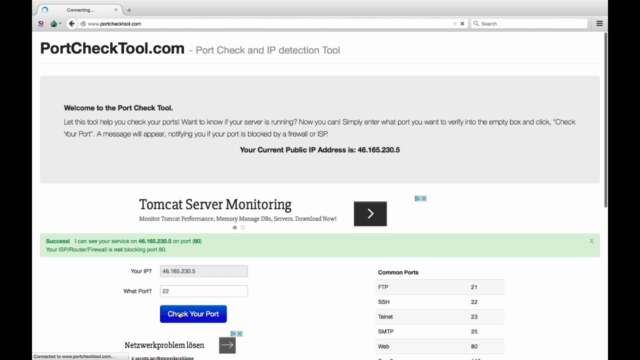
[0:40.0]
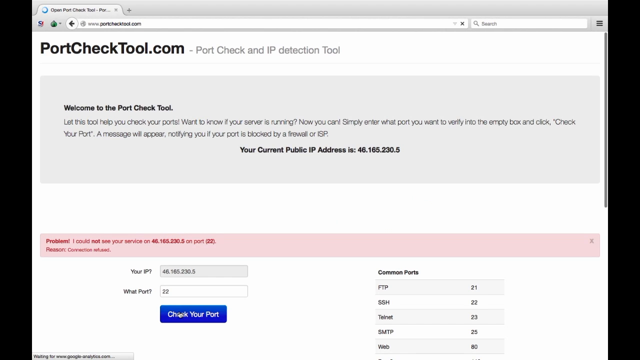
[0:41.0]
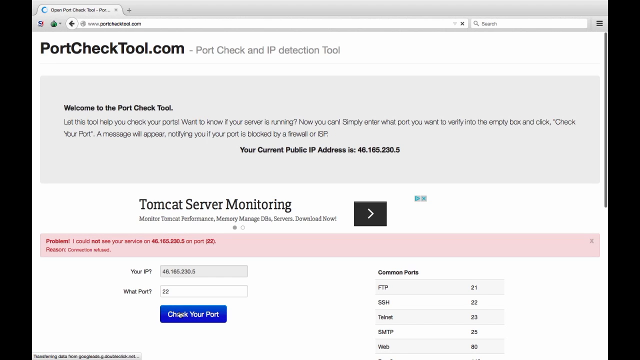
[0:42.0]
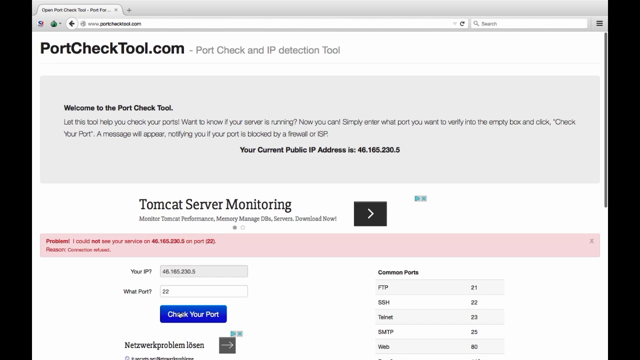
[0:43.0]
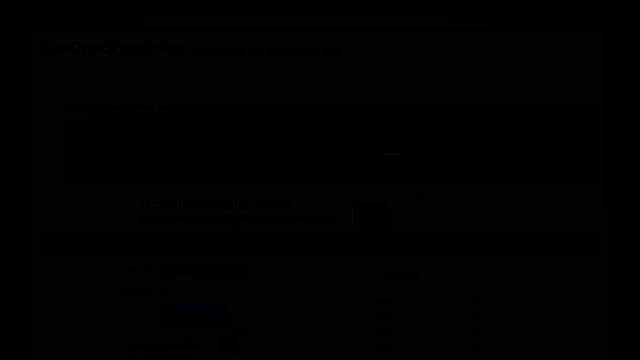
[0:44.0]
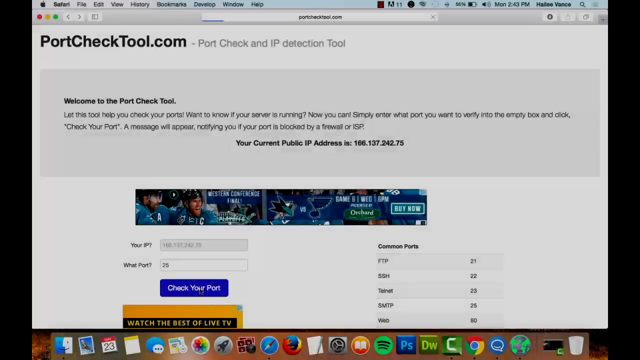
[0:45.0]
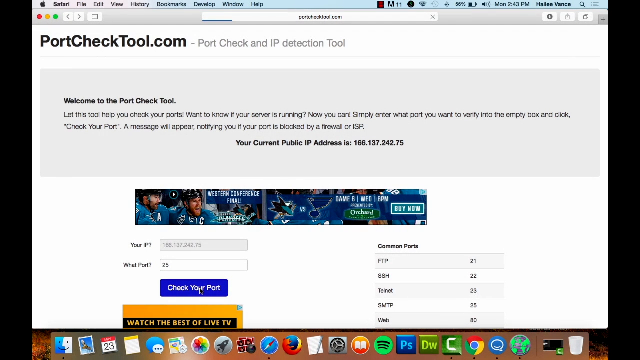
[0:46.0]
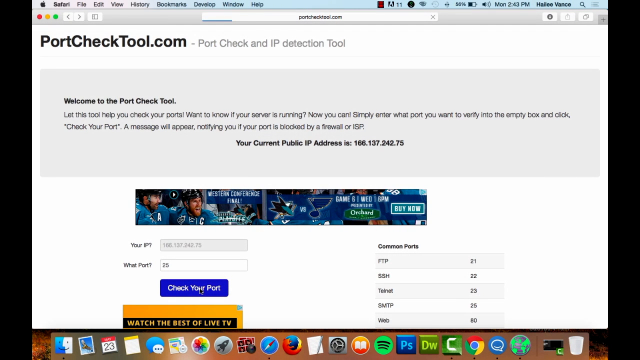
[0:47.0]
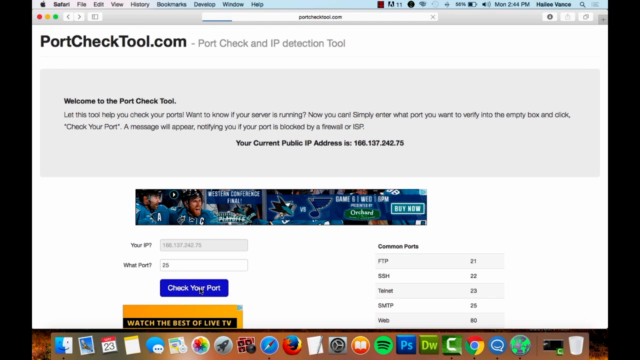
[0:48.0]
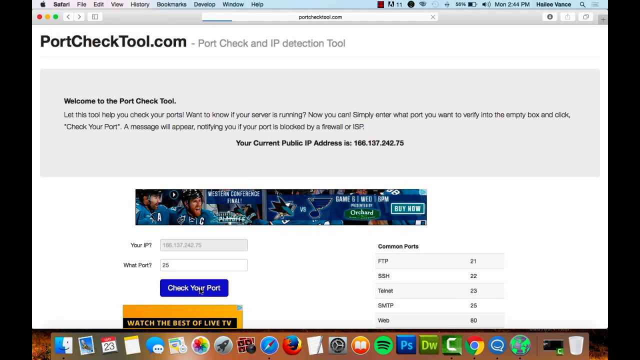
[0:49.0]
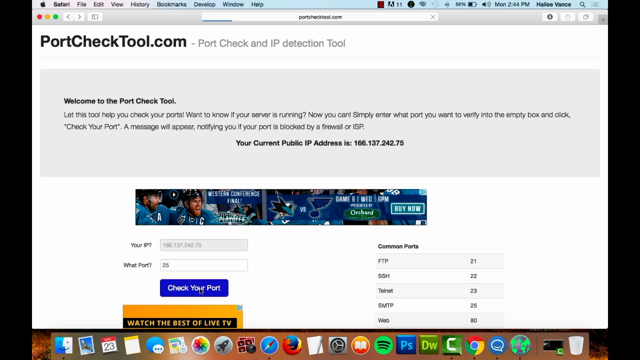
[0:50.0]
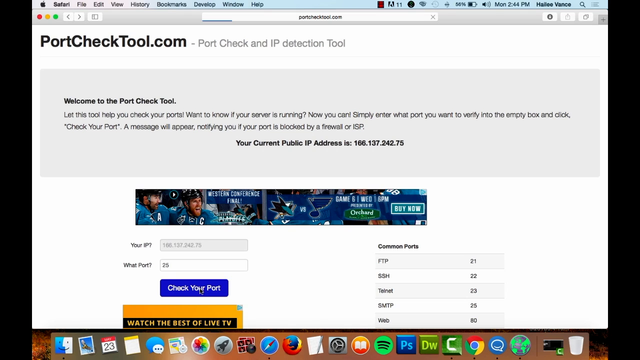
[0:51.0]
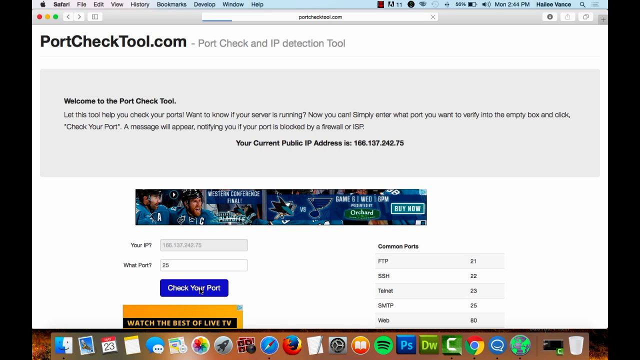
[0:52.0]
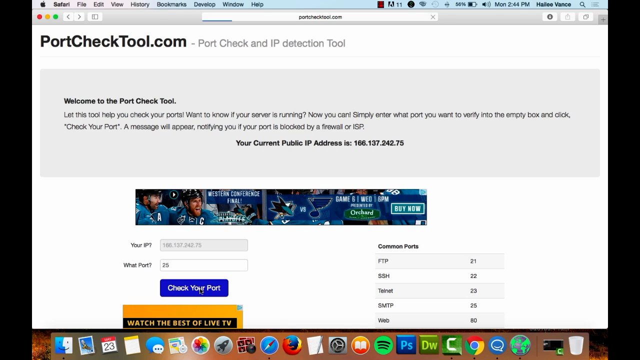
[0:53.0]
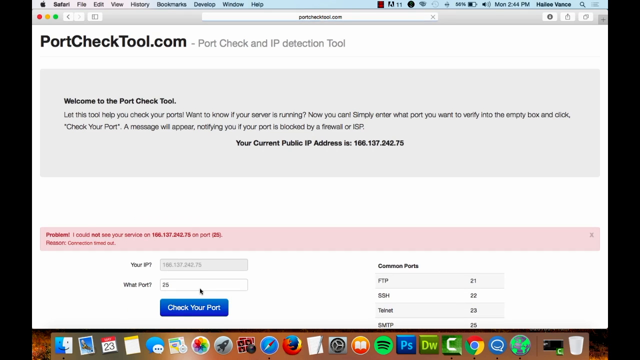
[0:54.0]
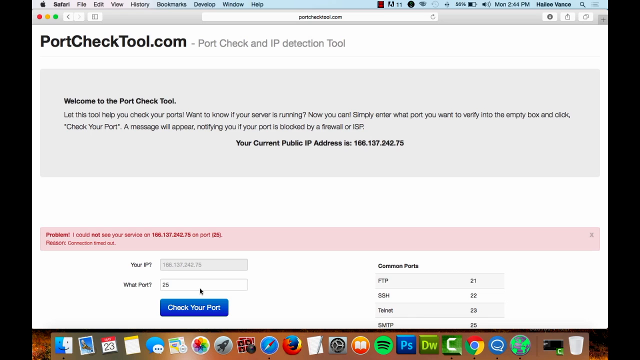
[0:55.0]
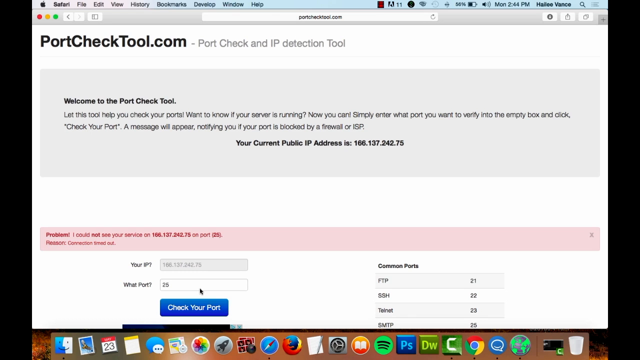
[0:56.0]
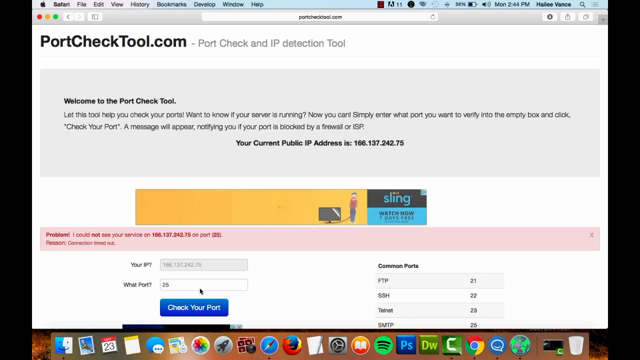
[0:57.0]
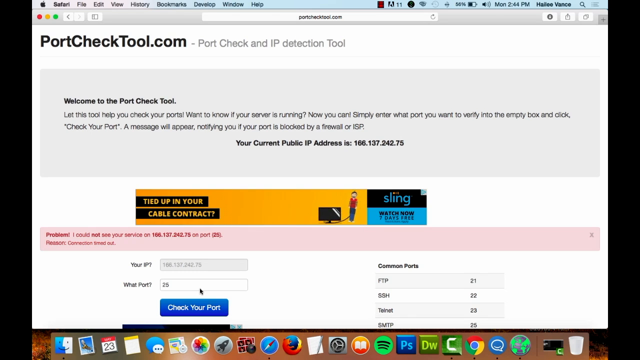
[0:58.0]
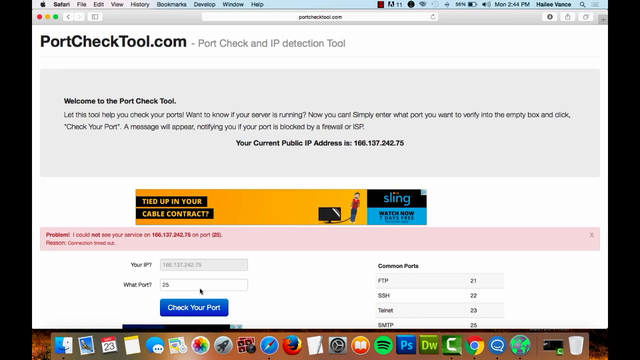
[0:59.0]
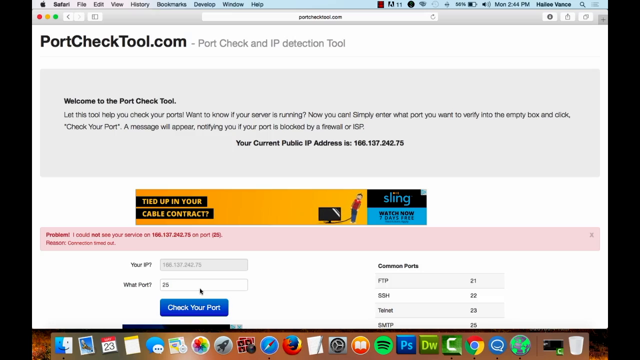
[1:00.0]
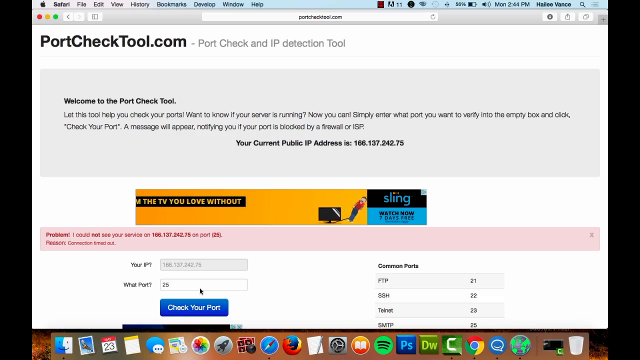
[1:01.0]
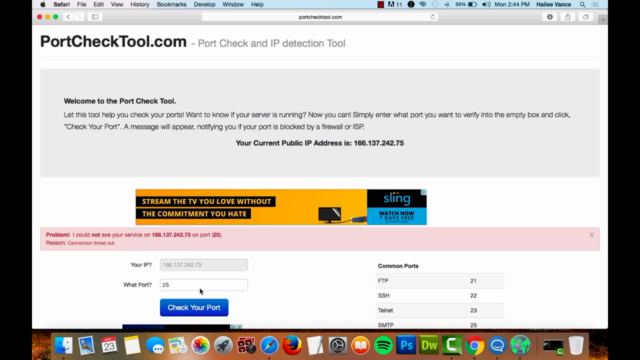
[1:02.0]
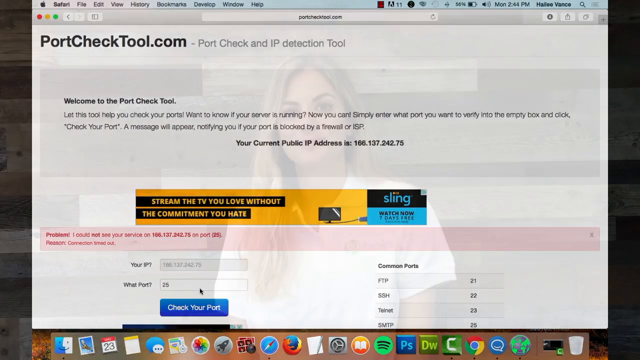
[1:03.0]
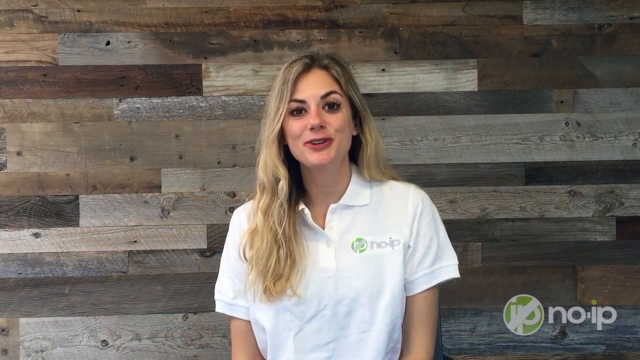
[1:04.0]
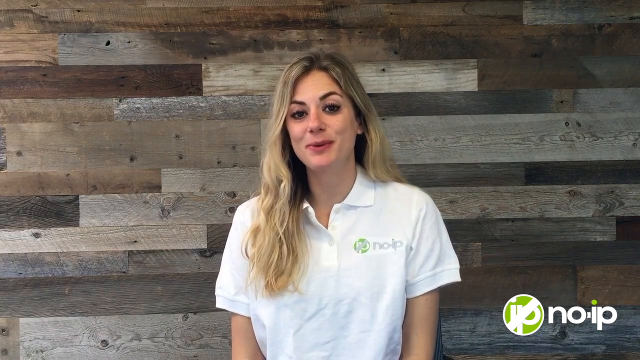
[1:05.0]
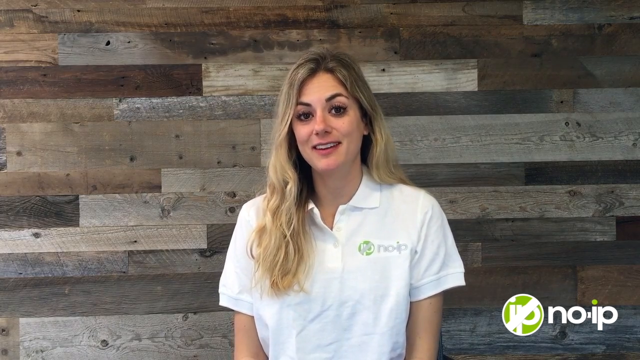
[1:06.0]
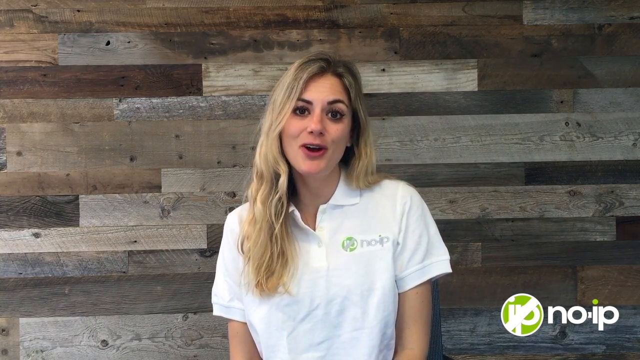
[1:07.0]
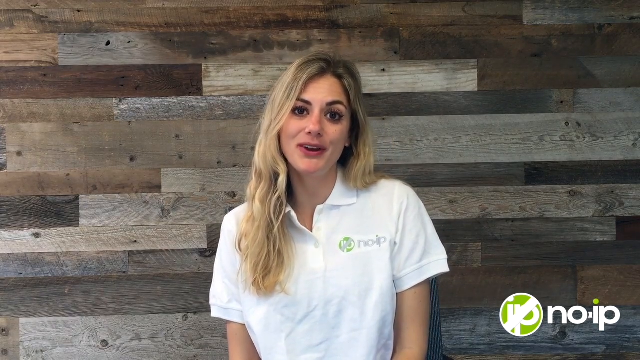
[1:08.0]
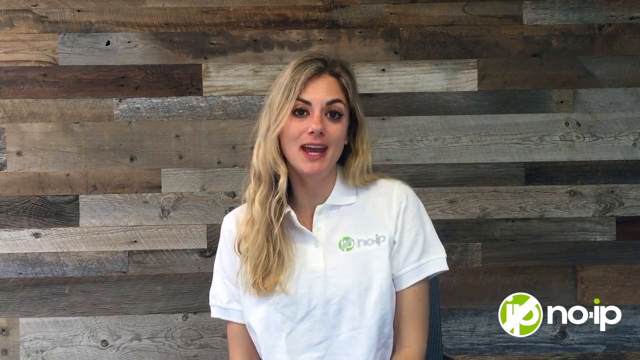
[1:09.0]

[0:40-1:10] A web page reads "portchecktool.com" and "port check and IP detection tool", and in a gray box underneath it says "welcome to the port check tool". The opening screen offers check your port, along with options for your IP and what port. It looks like a screenshot from a Macintosh, since various icons are at the base of the screen. Below the gray box is a picture of what looks like maybe some sort of sports scene. The picture then shifts to an ad that says "tied up in your cable connection stream the TV you want". Finally the video shifts over to the woman from the beginning, talking in front of the wood plank wall, with little else visible about her. The No IP logo is at the bottom while she is talking.